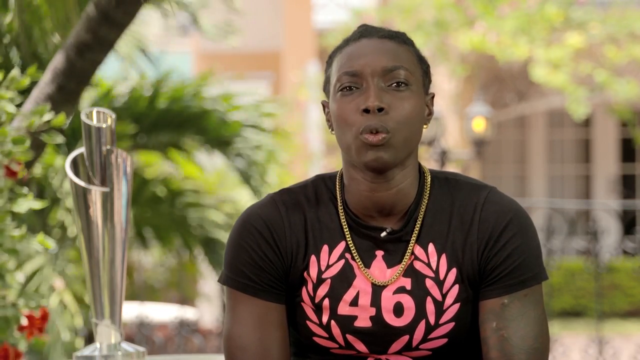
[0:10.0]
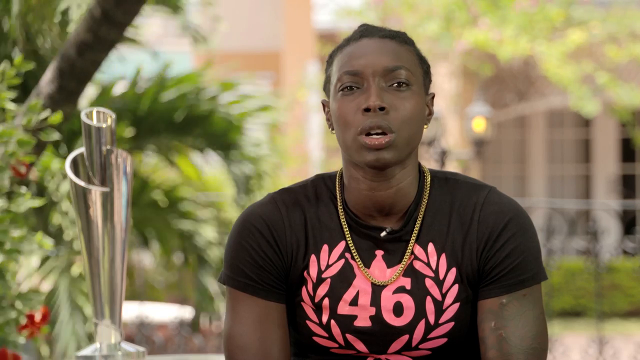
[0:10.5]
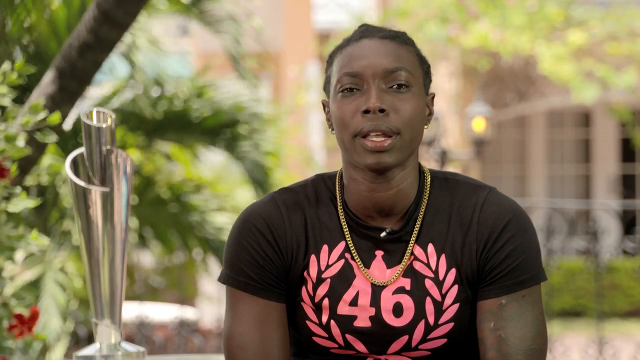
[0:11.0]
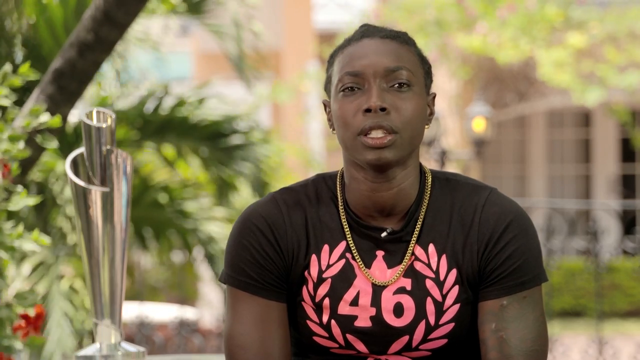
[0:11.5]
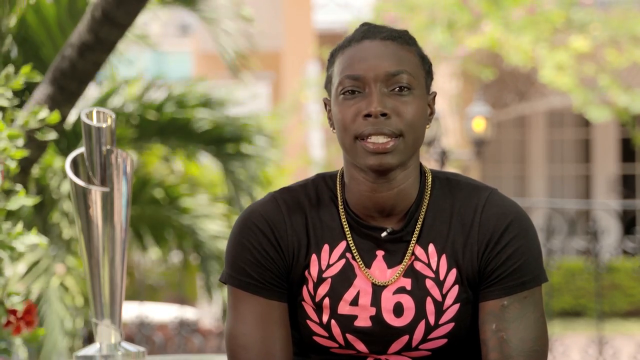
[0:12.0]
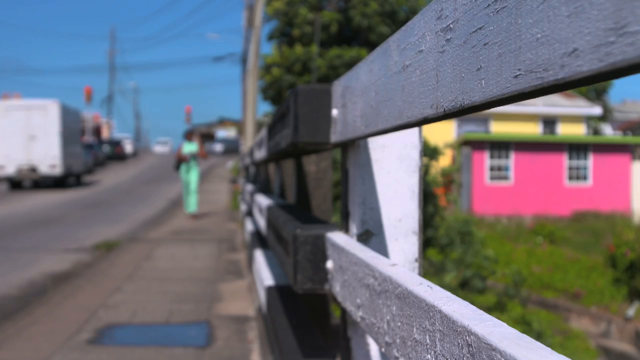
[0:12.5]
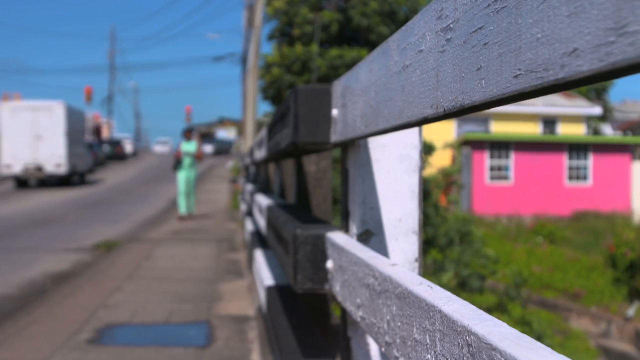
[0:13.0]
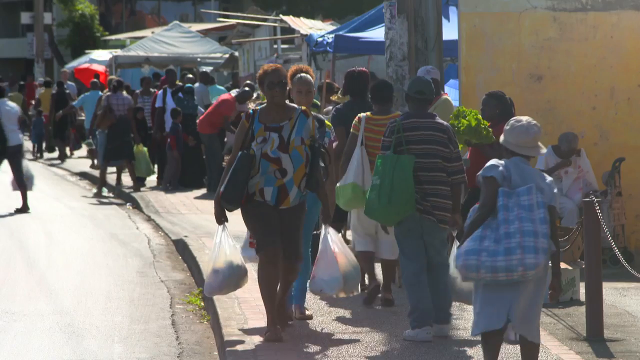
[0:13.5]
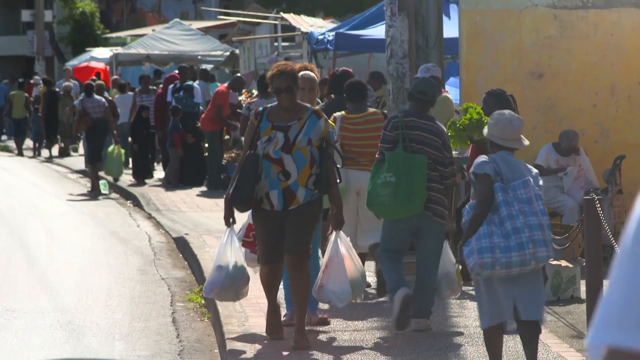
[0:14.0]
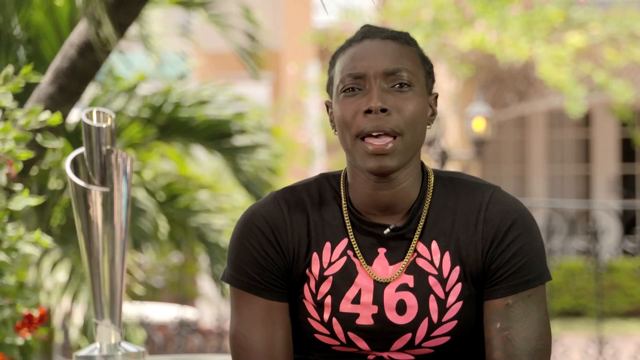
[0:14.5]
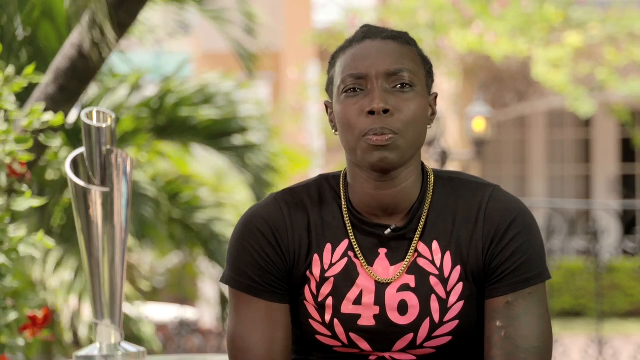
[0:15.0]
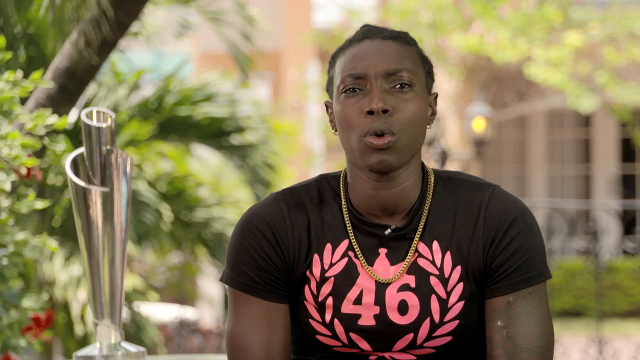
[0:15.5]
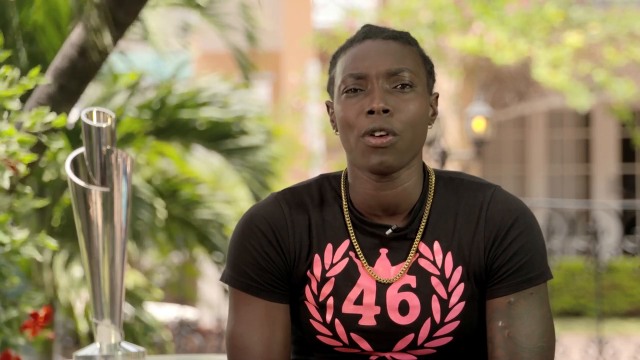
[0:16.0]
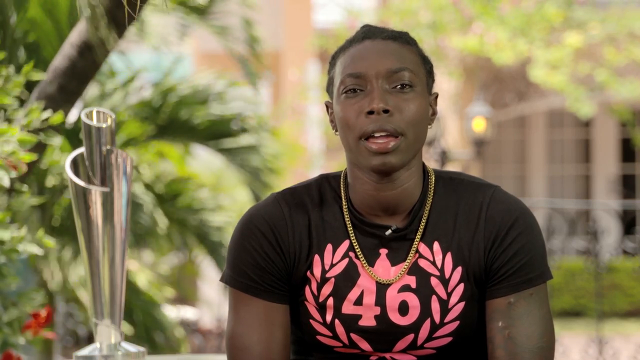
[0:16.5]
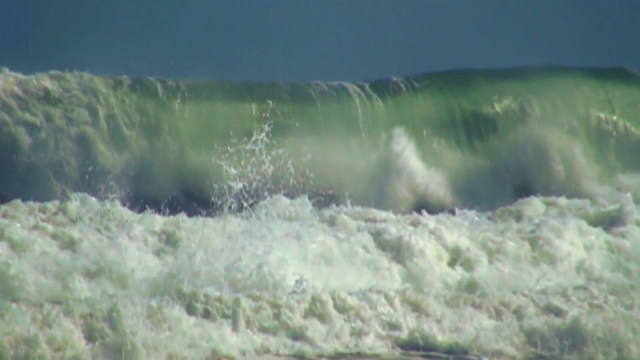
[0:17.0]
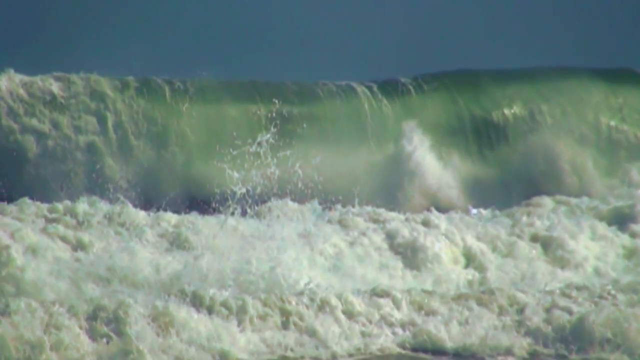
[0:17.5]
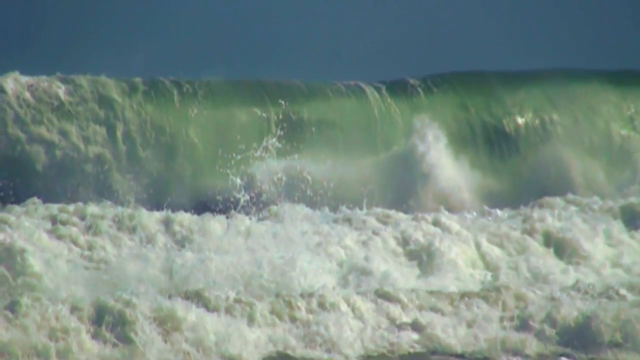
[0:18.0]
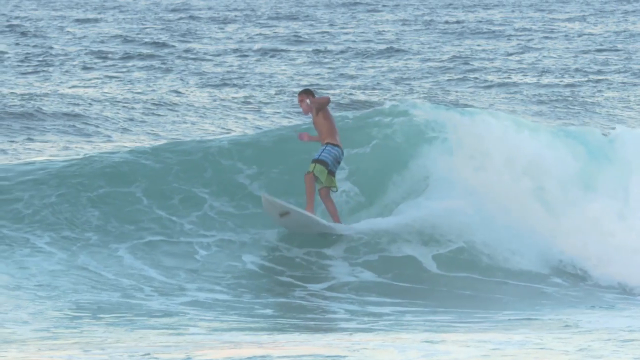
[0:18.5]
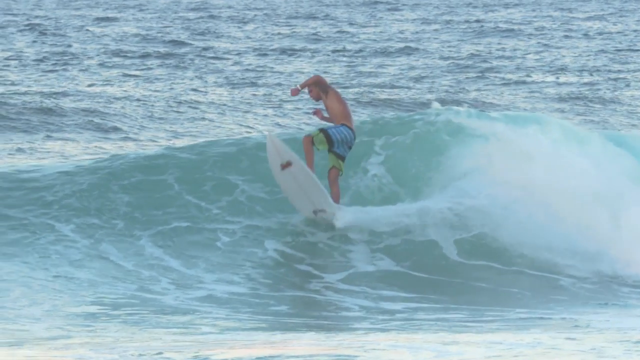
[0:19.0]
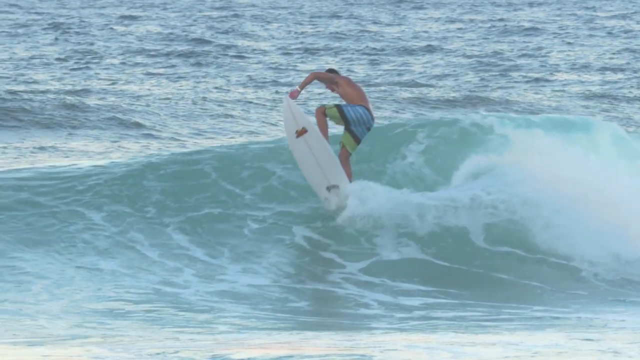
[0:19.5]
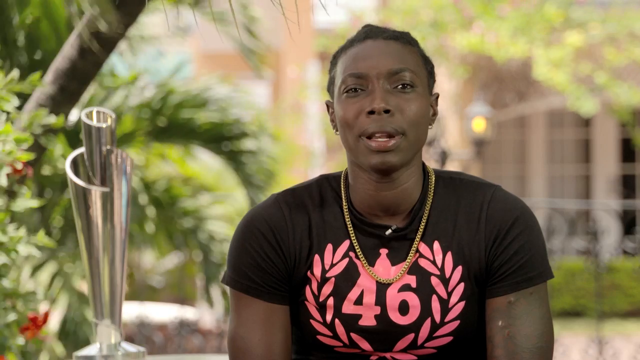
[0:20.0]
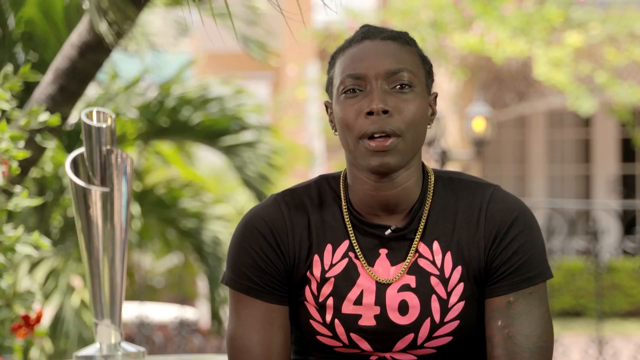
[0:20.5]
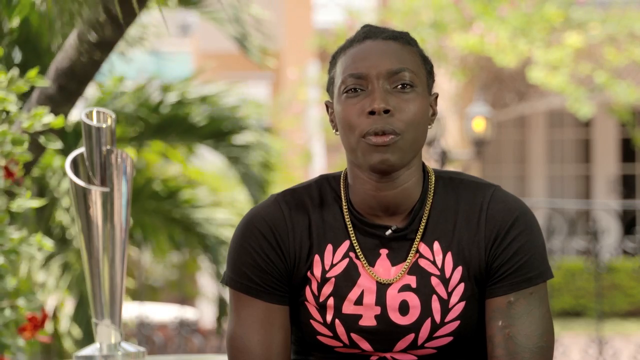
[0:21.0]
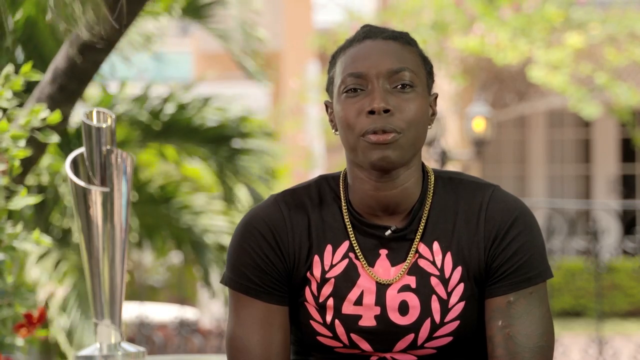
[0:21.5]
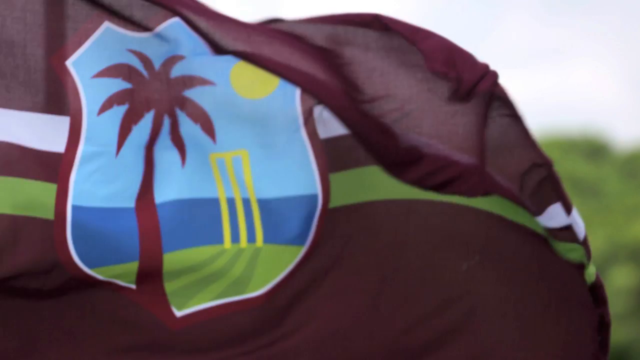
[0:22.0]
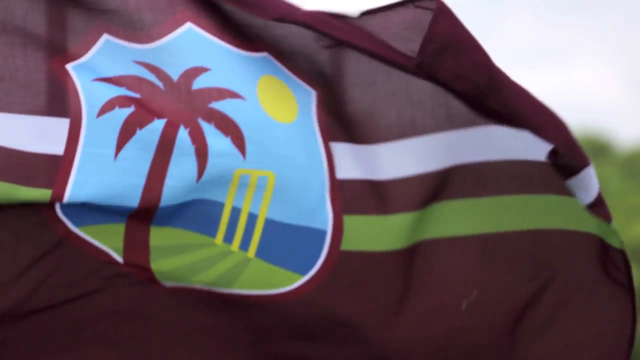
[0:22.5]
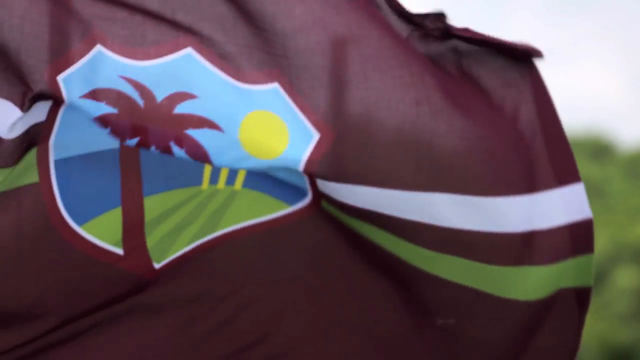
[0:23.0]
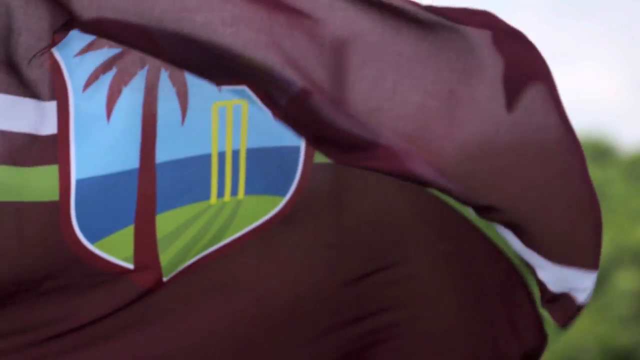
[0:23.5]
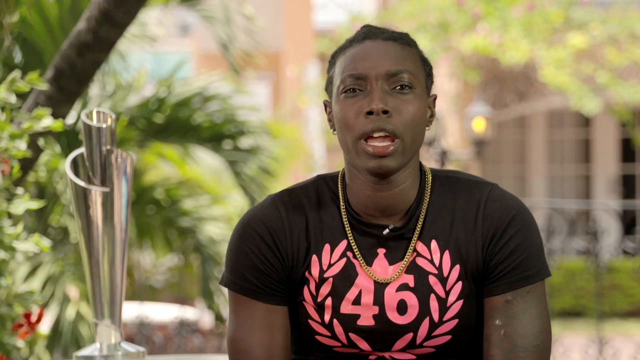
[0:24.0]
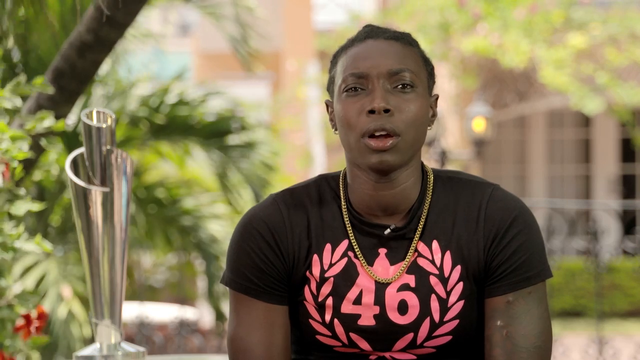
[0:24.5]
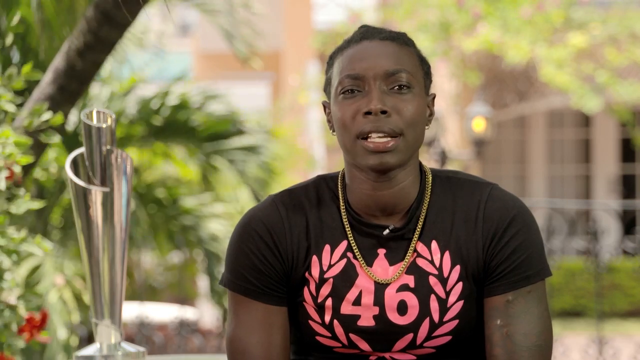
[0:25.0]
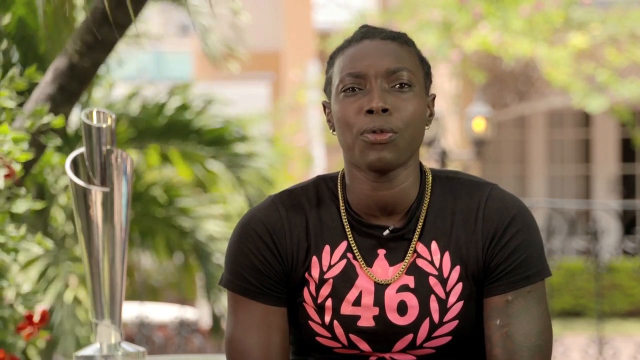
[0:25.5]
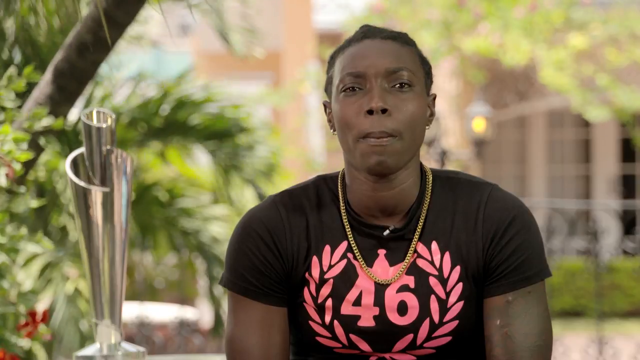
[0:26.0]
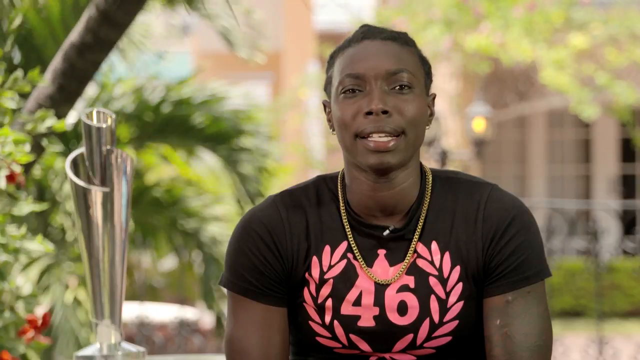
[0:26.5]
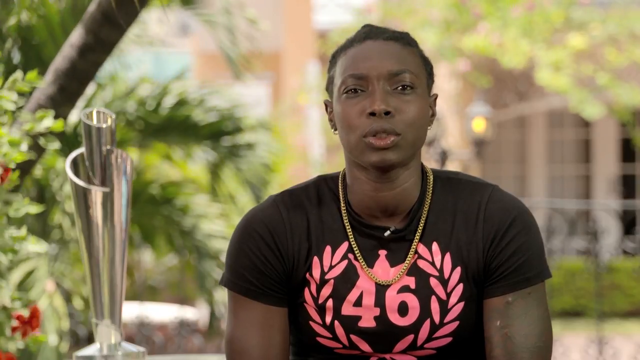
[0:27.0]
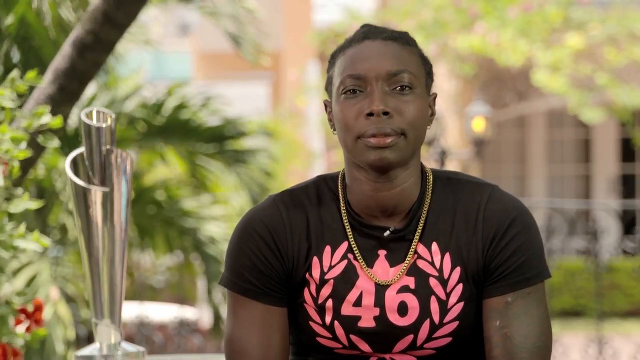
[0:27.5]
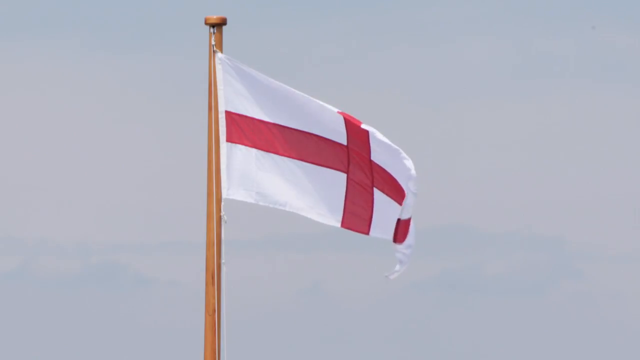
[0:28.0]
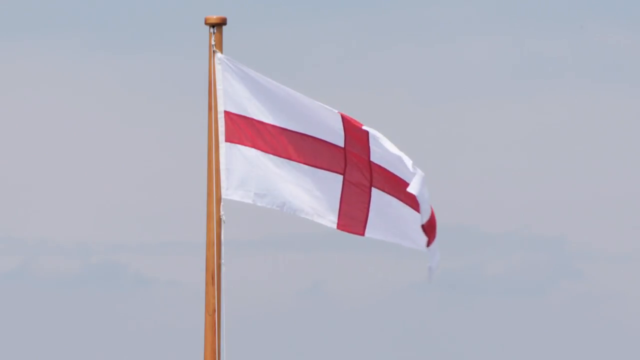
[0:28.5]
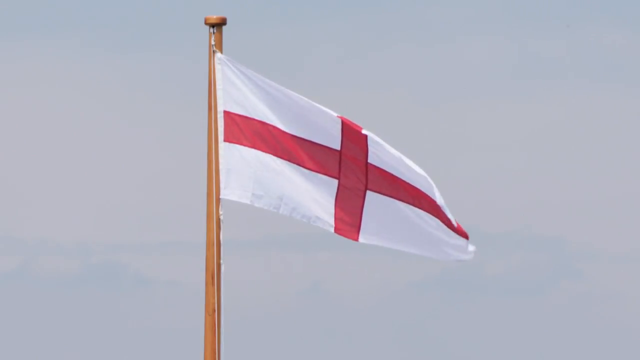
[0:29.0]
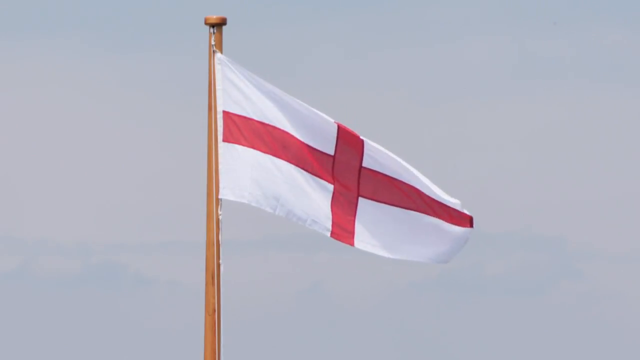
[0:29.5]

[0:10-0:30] A woman wears a black t-shirt with the number 46 in red and a gold chain. Some trees are in the background, and a silver trophy is on the left of her. She looks at the camera and talks. Then a woman in blue walks on the sidewalk while a truck goes down the street. A close-up shows a blue fence, with some trees in the background and a pink and yellow house. A crowded sidewalk follows, with a bunch of people walking, some of them carrying groceries and bags, and some tents in the distance. The woman with the gold chain is shown talking again. Very large waves splash in slow motion, and a guy on a board rides waves in the water. The woman talks again, and then a black flag with white and green stripes appears, showing a palm tree and a sun. The woman is shown talking again with the trees in the background blowing in the wind, along with a very large white and red flag.